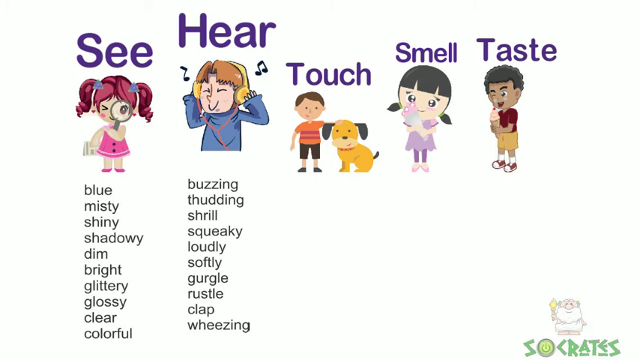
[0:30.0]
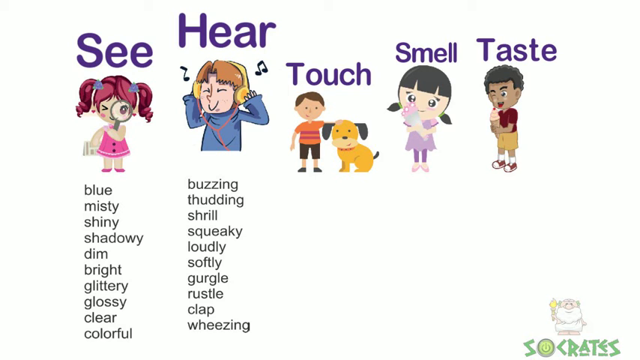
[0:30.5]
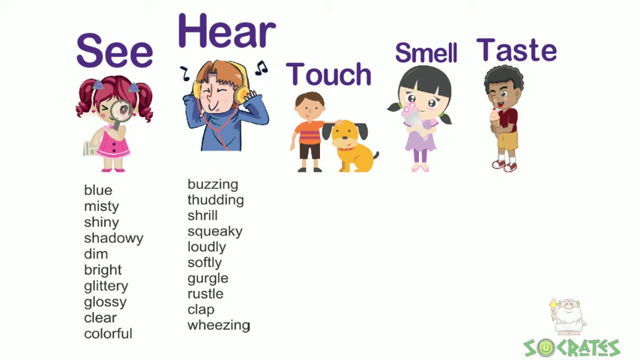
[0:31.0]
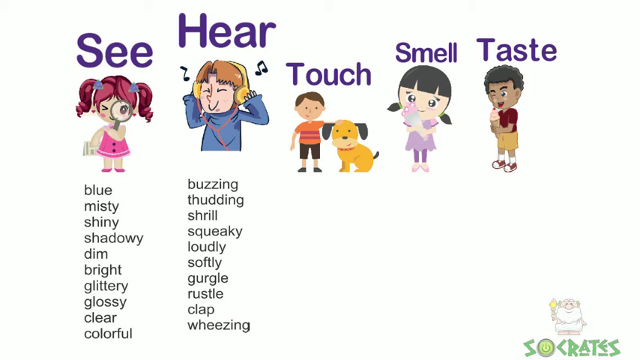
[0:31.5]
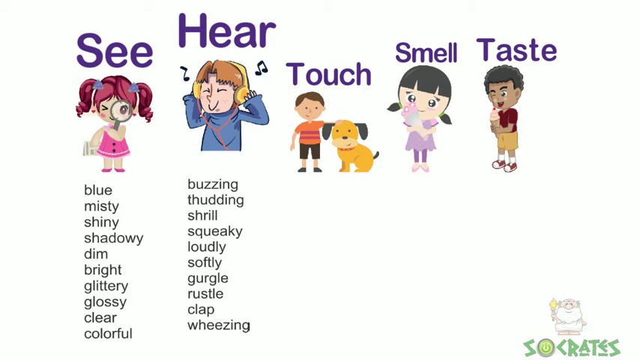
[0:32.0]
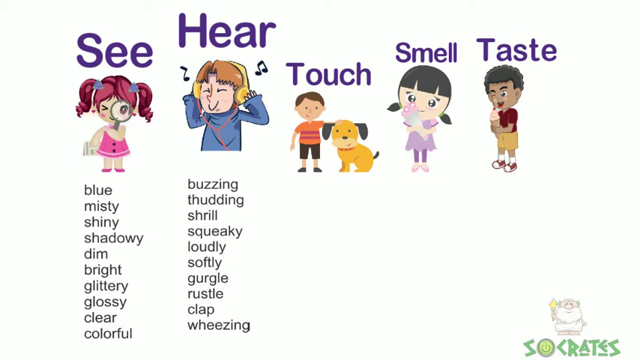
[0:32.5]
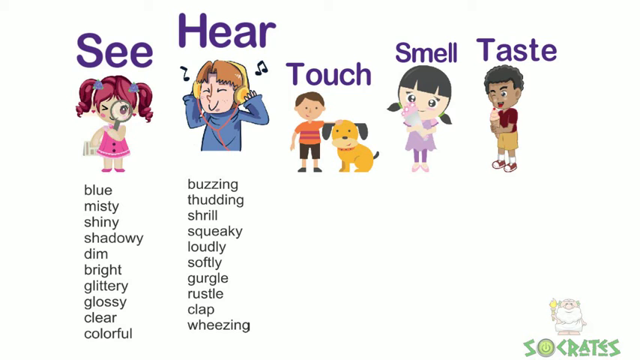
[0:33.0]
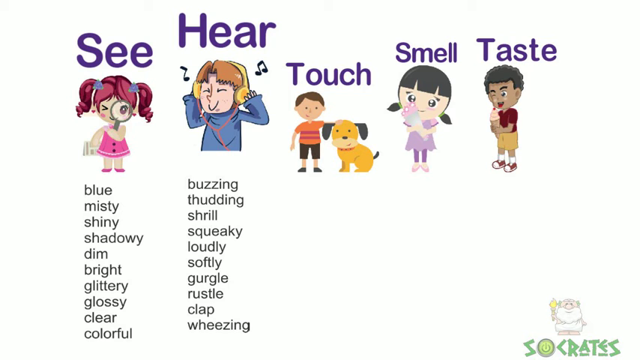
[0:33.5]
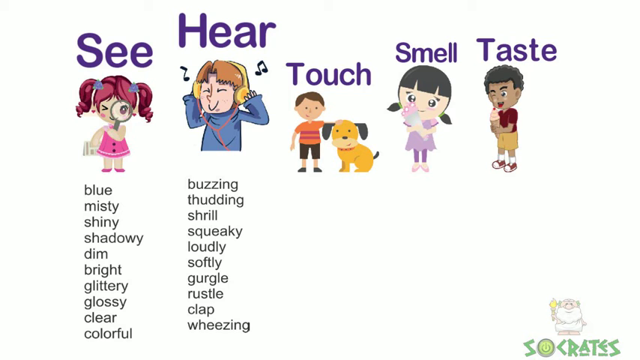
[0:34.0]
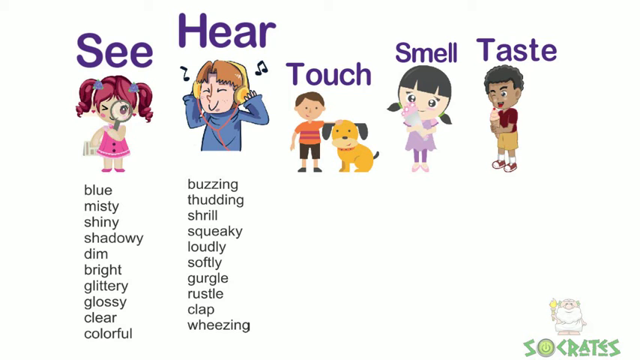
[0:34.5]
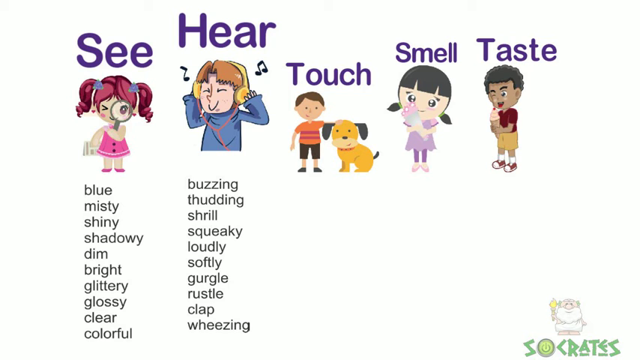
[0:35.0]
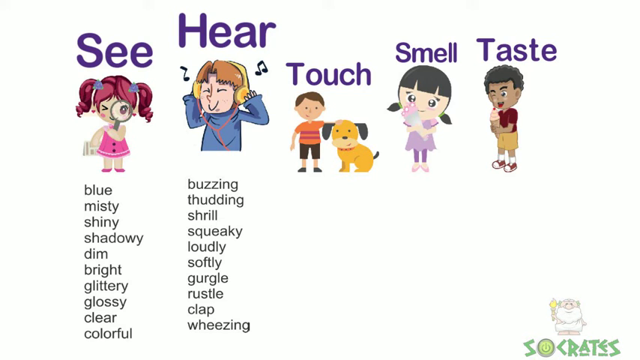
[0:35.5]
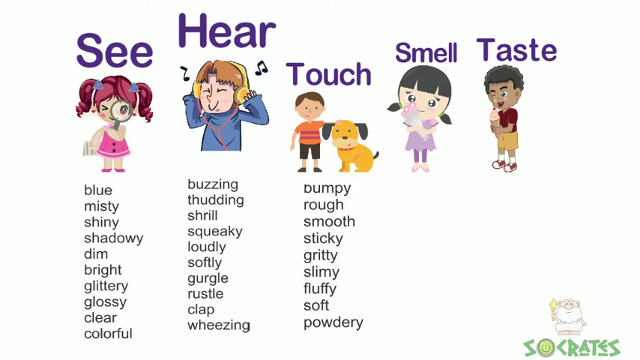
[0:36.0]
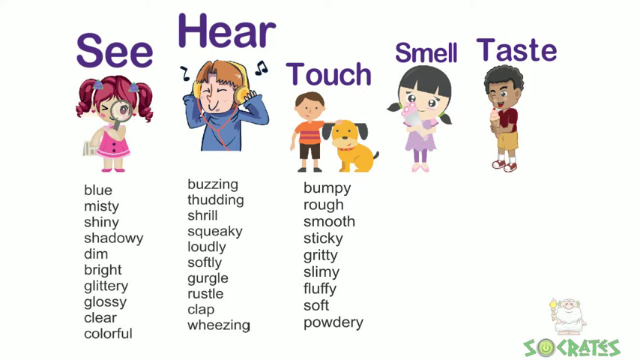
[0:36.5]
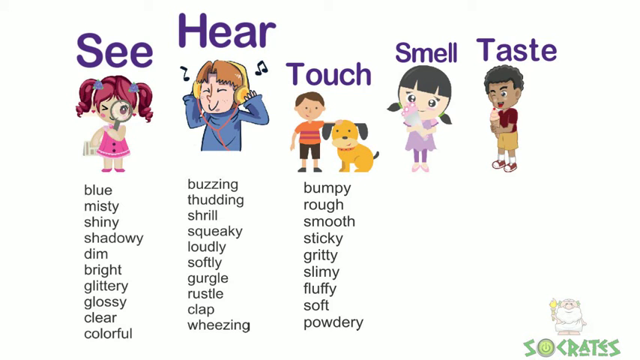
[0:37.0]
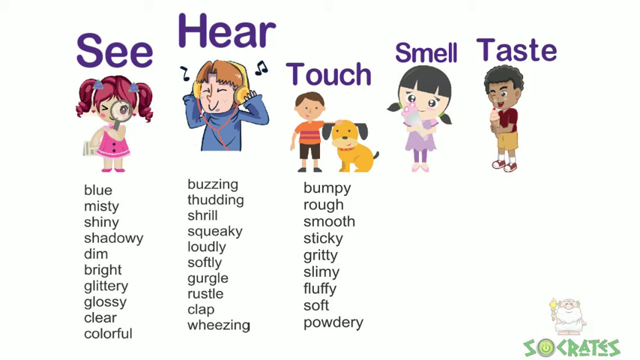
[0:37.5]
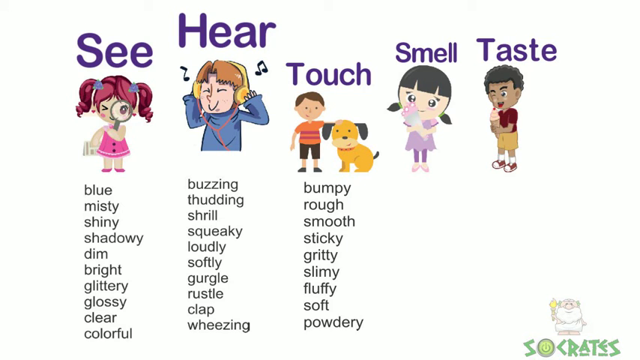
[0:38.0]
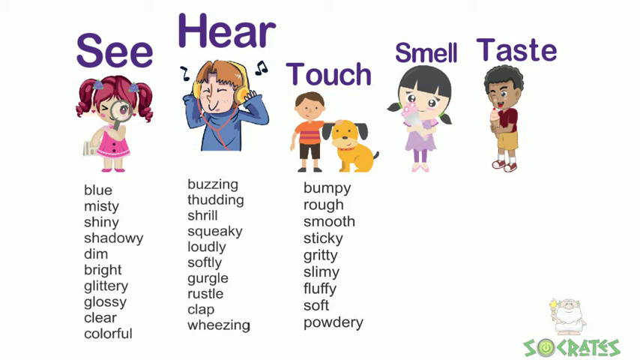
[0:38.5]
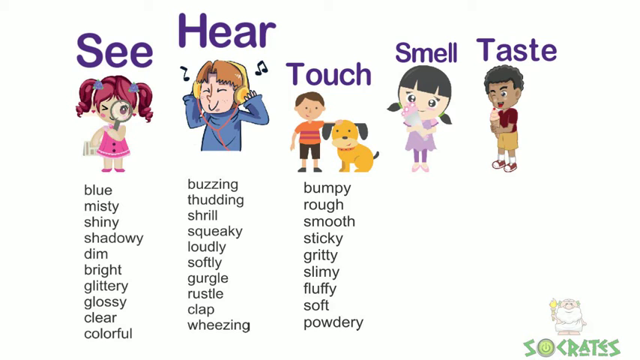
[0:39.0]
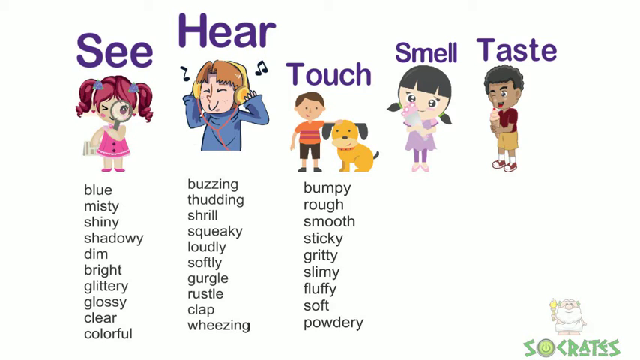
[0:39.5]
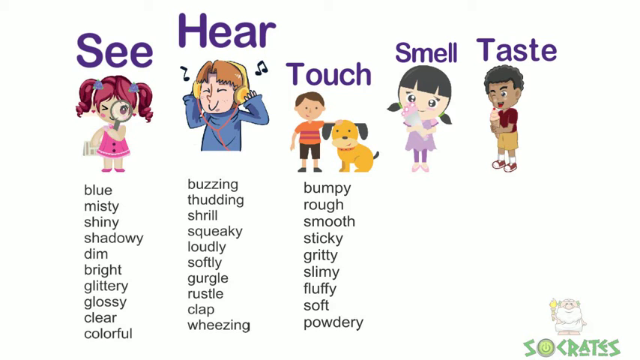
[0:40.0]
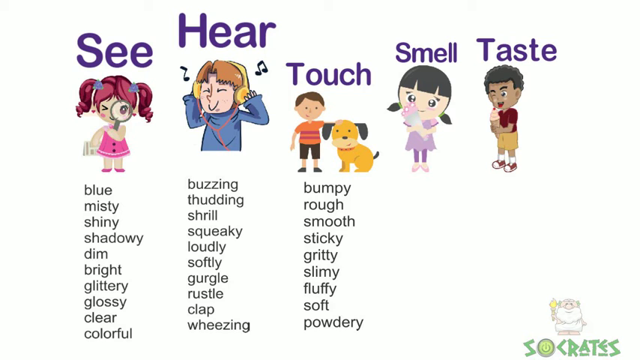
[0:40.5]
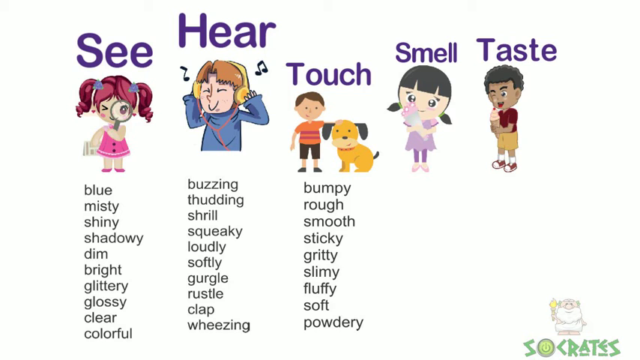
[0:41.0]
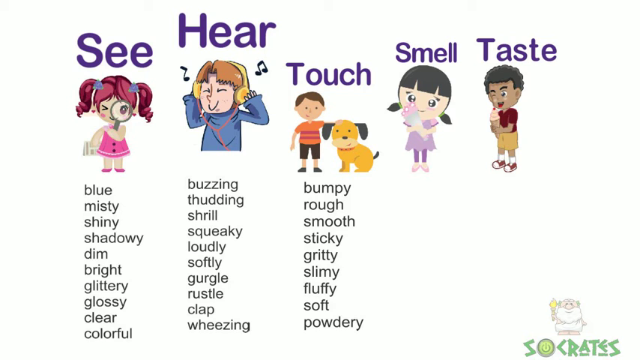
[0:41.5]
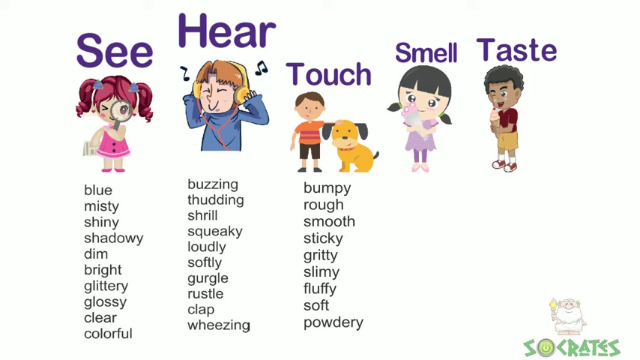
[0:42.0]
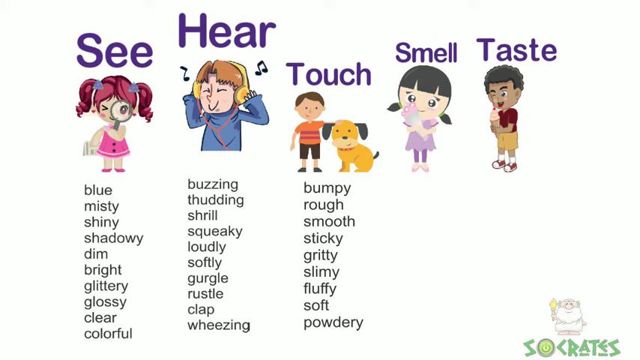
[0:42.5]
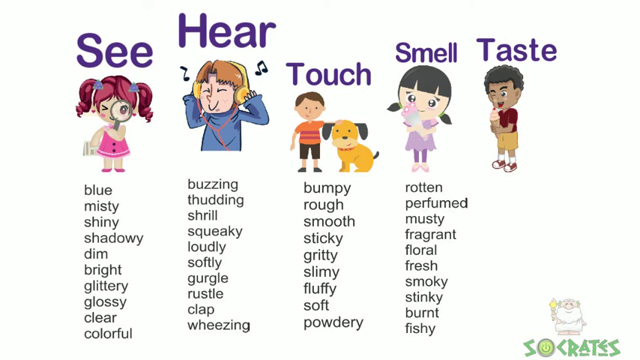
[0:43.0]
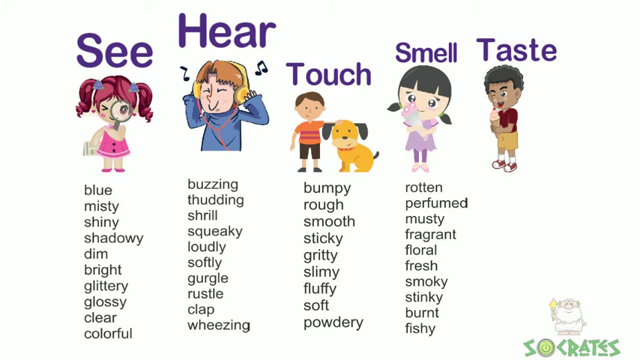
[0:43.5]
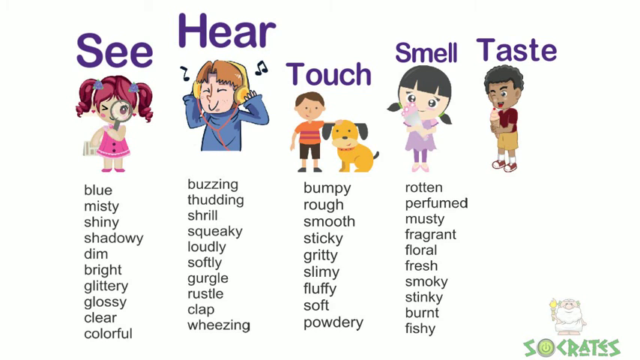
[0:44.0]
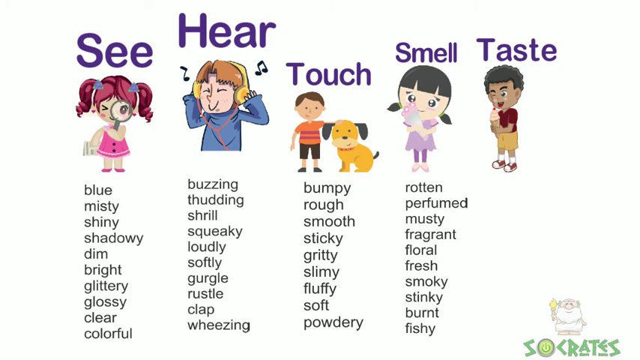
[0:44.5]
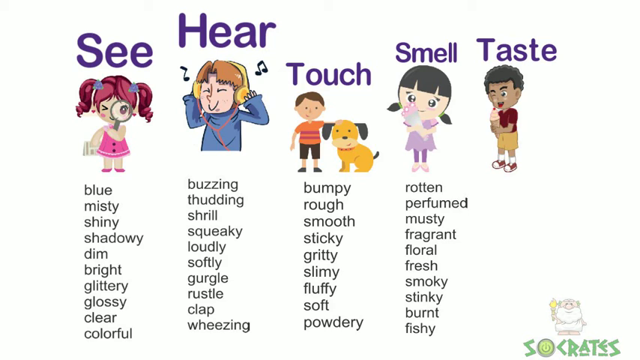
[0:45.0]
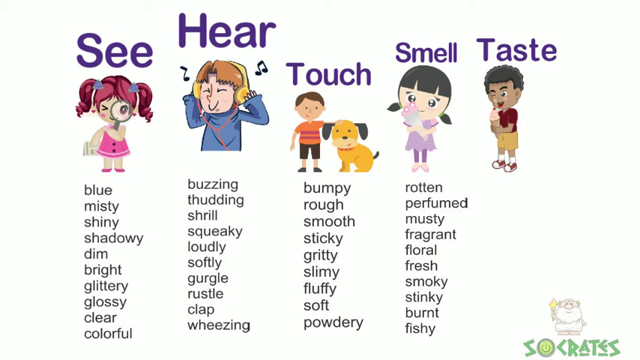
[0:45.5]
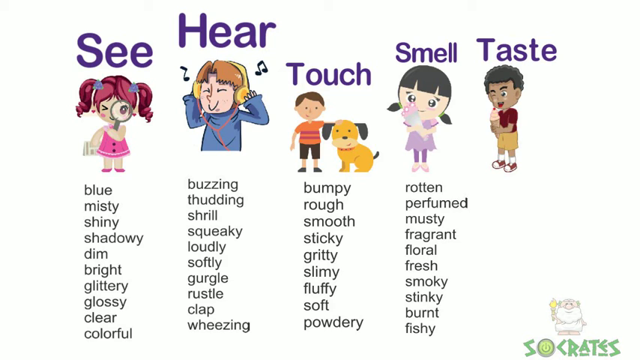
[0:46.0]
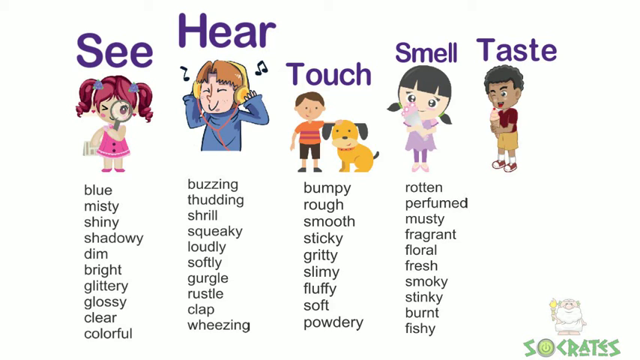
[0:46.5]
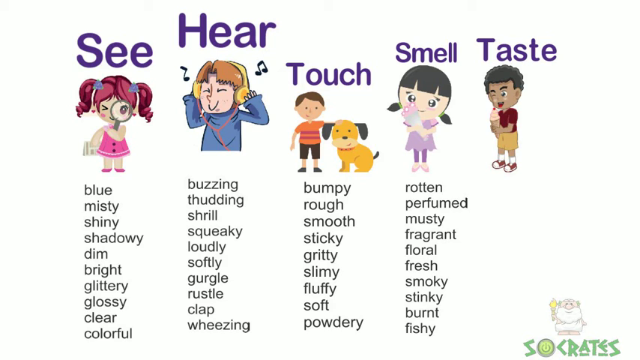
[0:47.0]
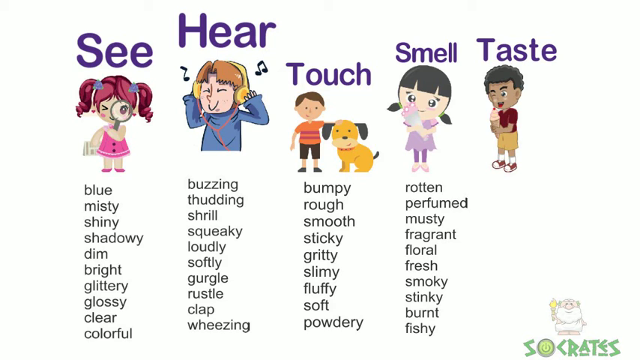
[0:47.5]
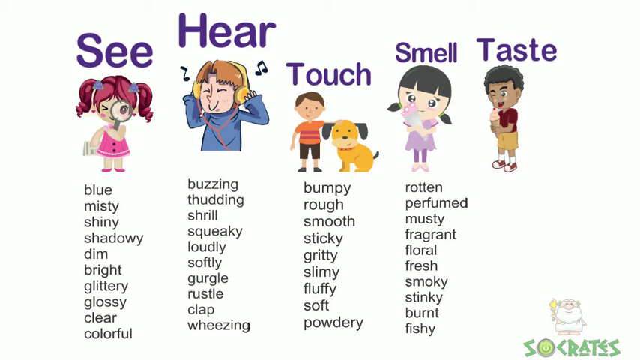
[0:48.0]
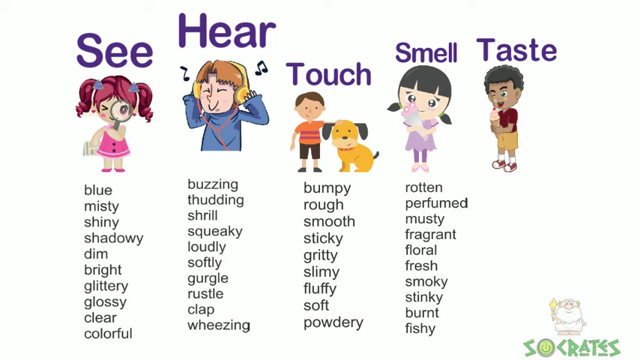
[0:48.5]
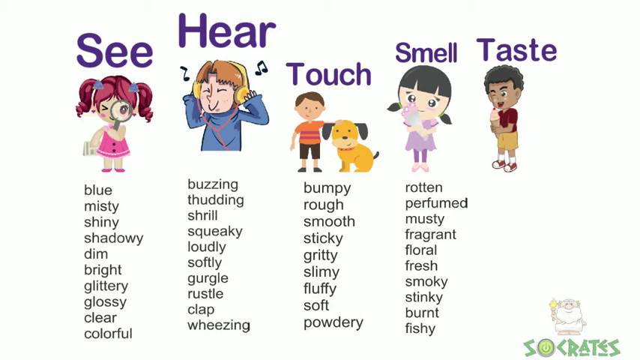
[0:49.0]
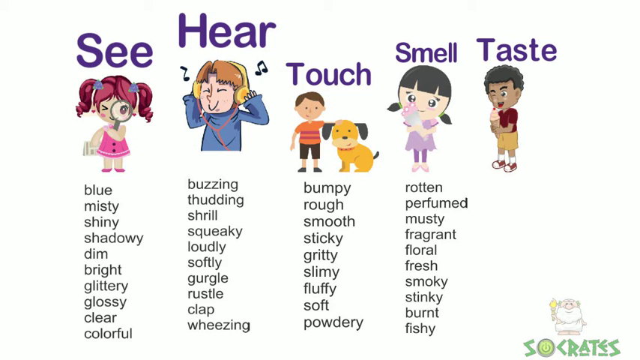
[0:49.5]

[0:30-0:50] On the boy with headphones, who wears a blue sweater and yellow headphones with a pink cable hanging from them, "hear" is written on top, and below it the words go down: "buzzing, thudding, shrill, squeaky, loudly, softly, gurgle, rustle, clap, wheezing". On the boy standing with the dog, "touch" is written on top, with the words "bumpy, rough, smooth, sticky, gritty, slimy, fluffy, soft, powdery" going down below. Above the girl holding flowers is the word "smell"; she has black hair and wears a purple dress and purple pants, and below her are the words "rotten, perfumed, musty, fragrant, floral, fresh, smoky, stinky, burnt, fishy". Standing next to the girl is a boy in yellow pants and a maroon t-shirt holding an ice cream, wearing maroon and white shoes.